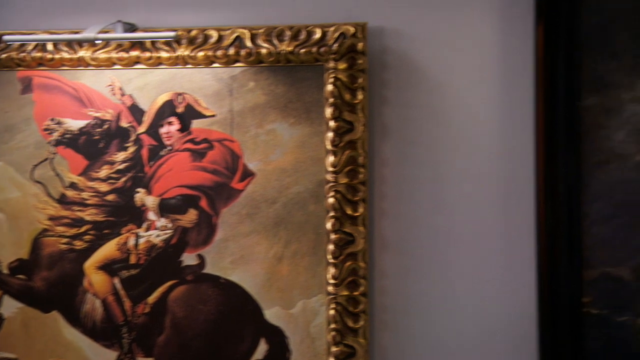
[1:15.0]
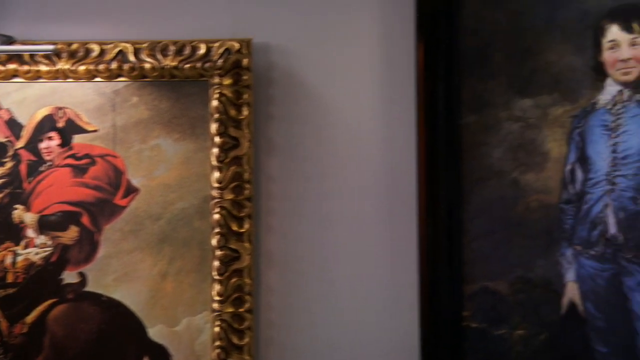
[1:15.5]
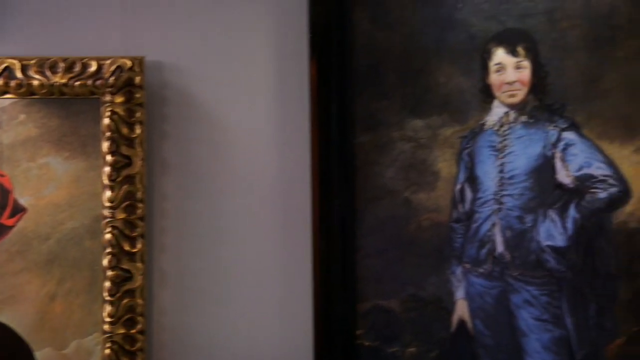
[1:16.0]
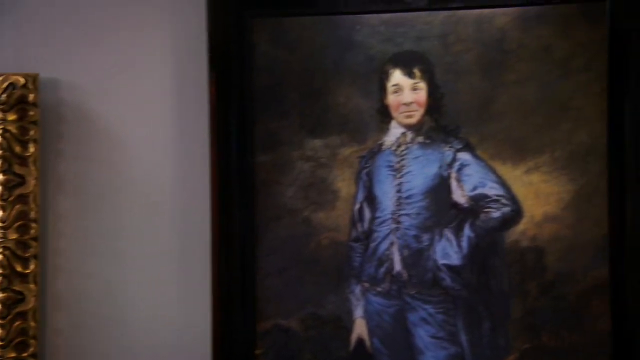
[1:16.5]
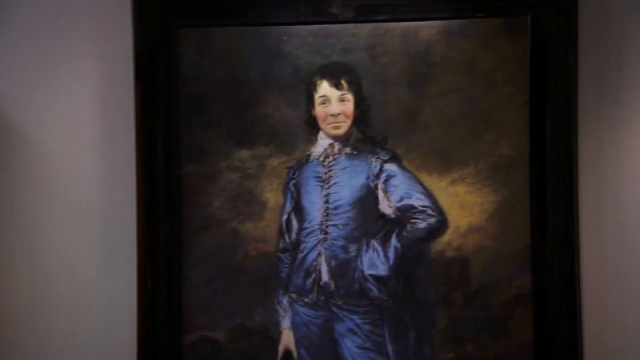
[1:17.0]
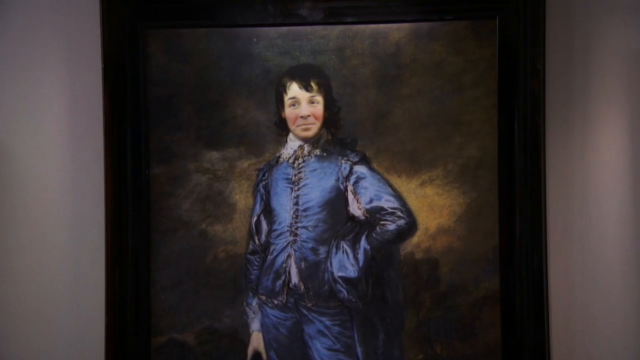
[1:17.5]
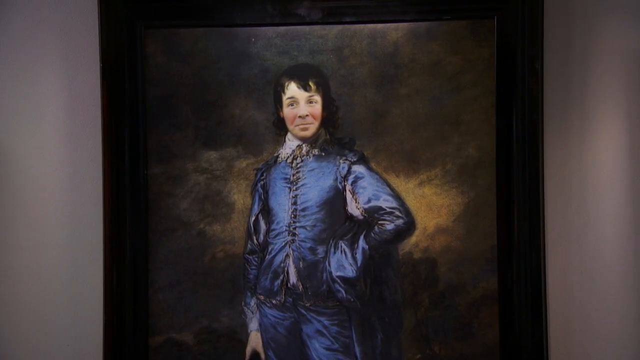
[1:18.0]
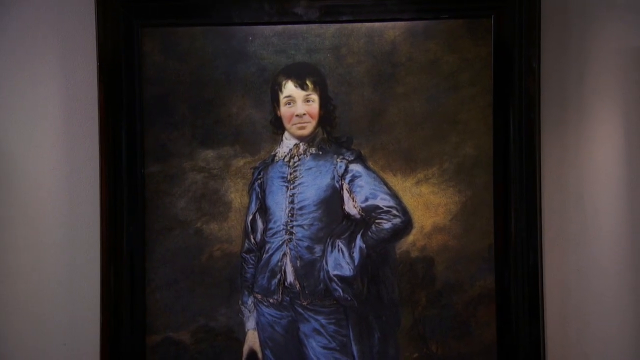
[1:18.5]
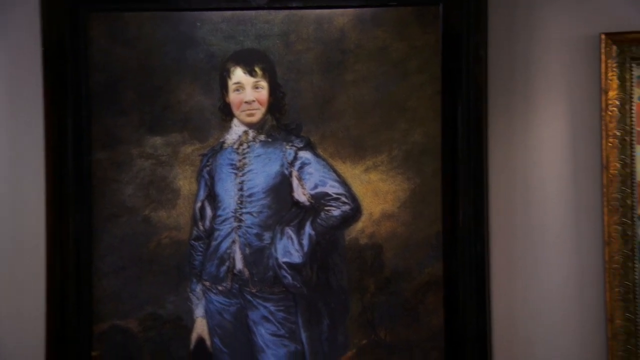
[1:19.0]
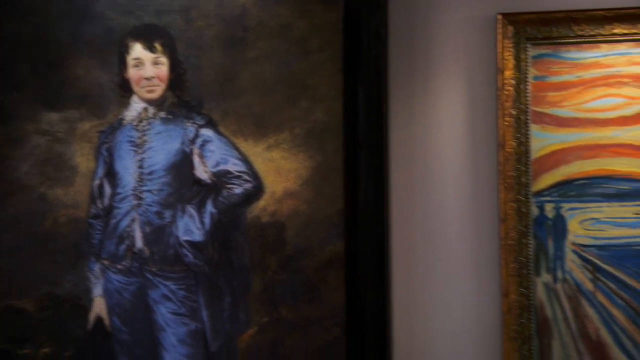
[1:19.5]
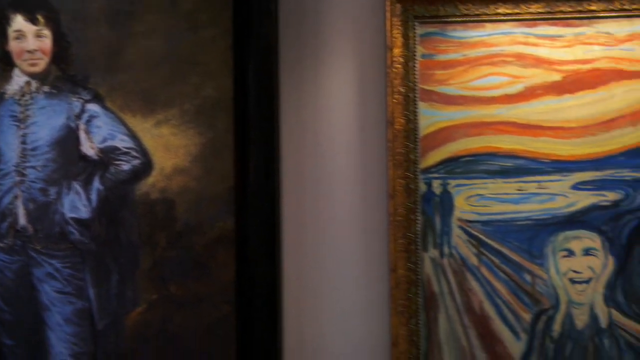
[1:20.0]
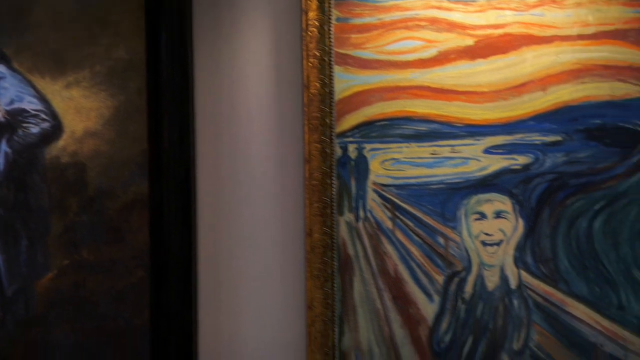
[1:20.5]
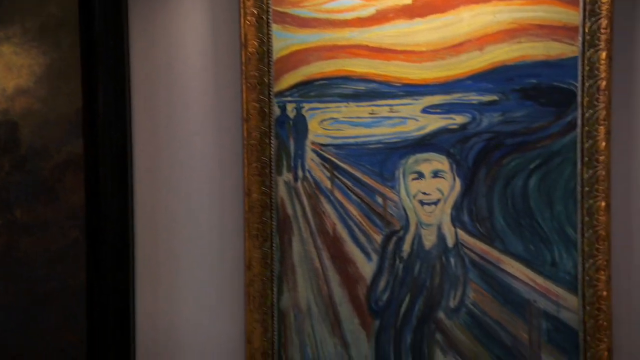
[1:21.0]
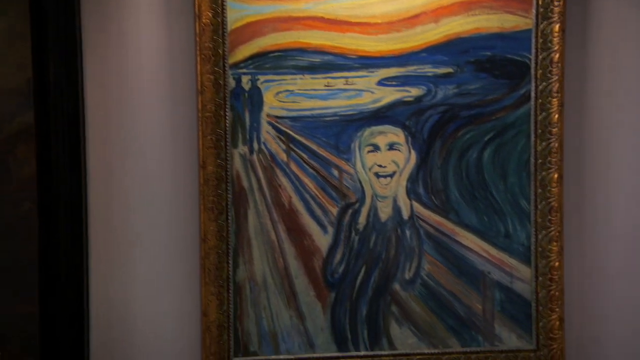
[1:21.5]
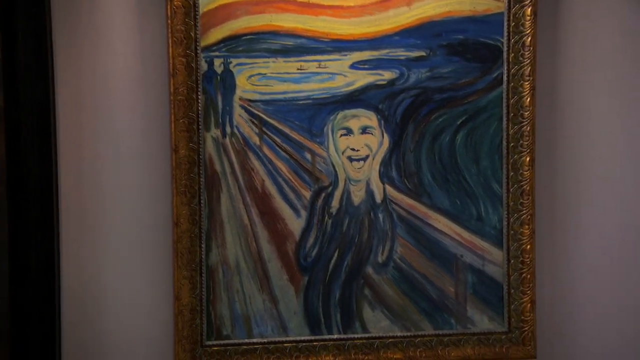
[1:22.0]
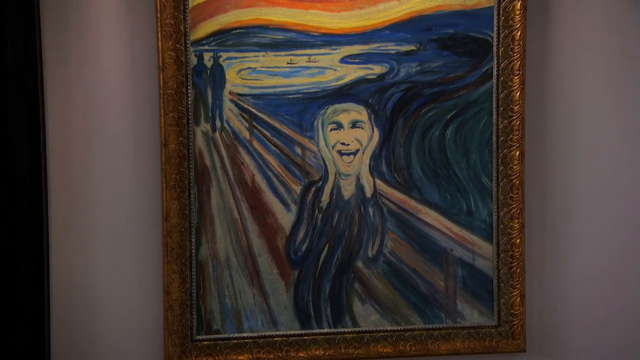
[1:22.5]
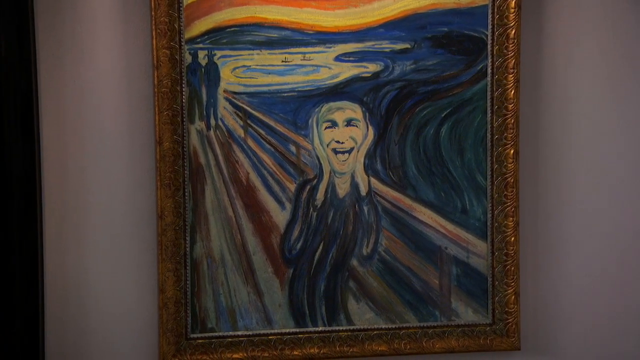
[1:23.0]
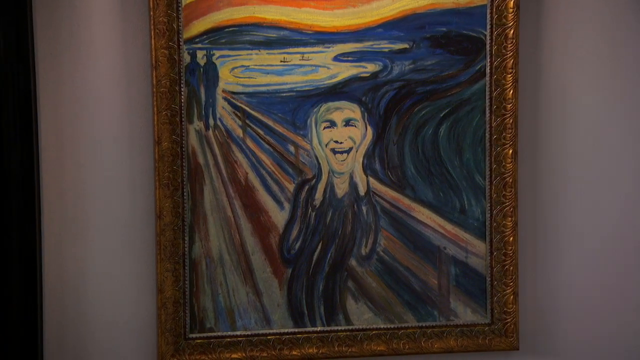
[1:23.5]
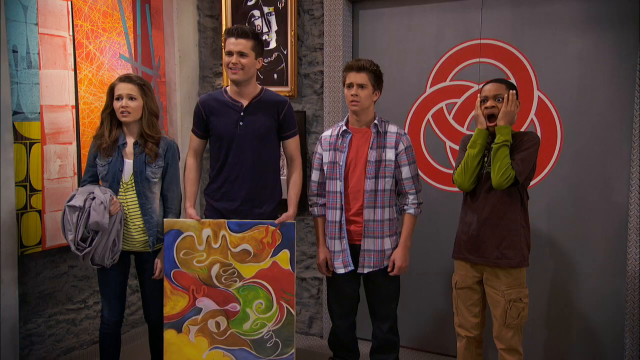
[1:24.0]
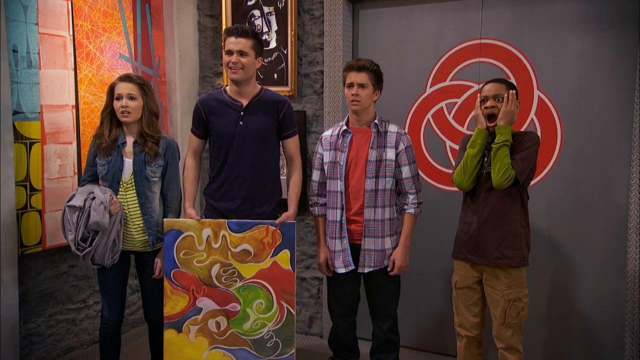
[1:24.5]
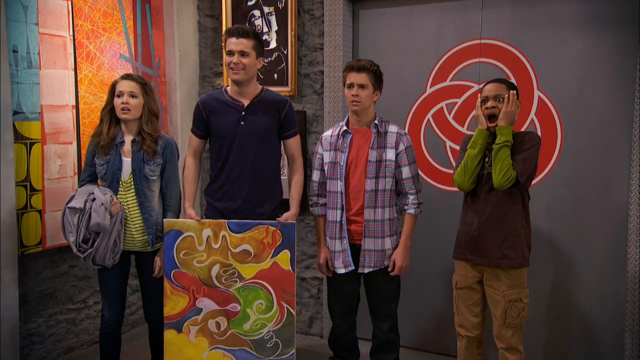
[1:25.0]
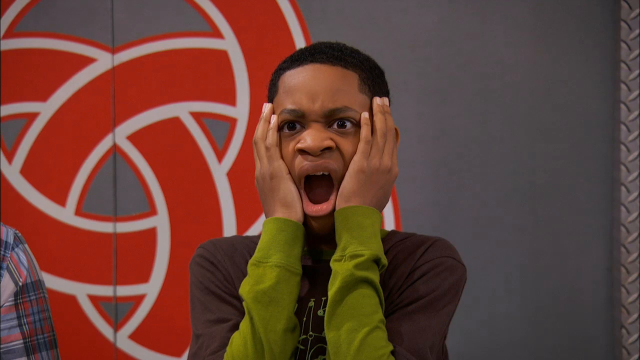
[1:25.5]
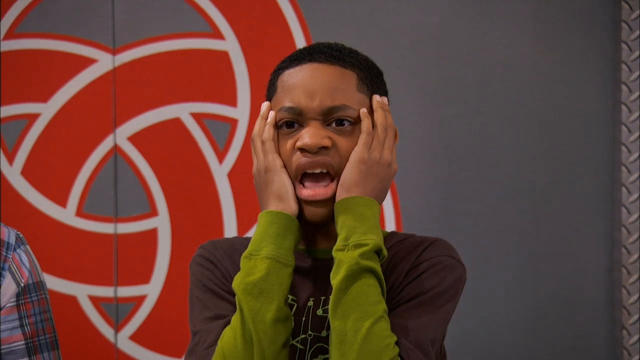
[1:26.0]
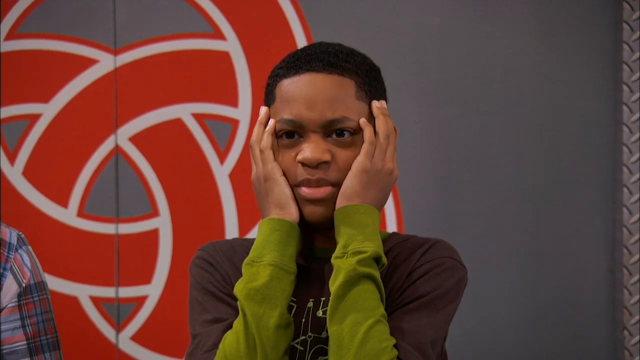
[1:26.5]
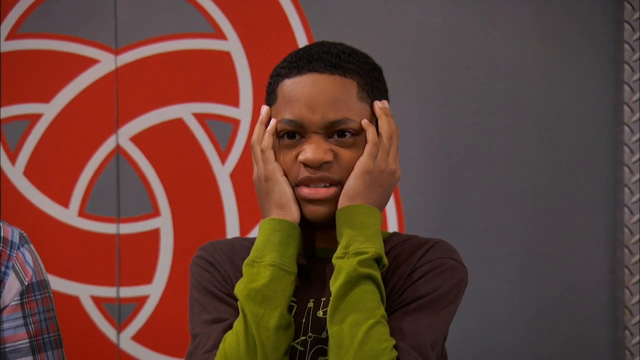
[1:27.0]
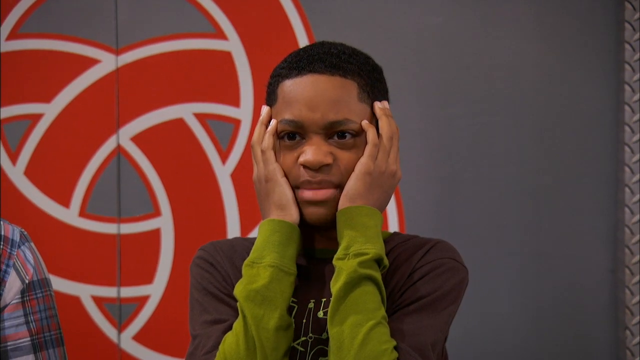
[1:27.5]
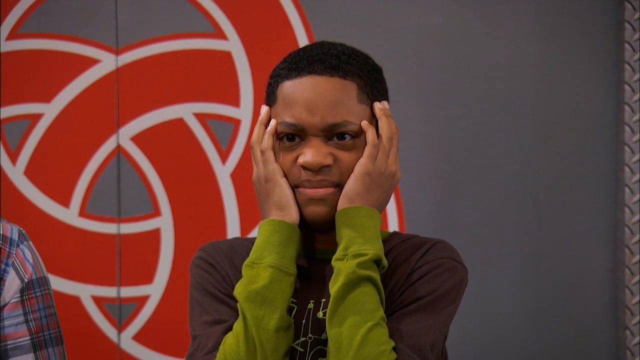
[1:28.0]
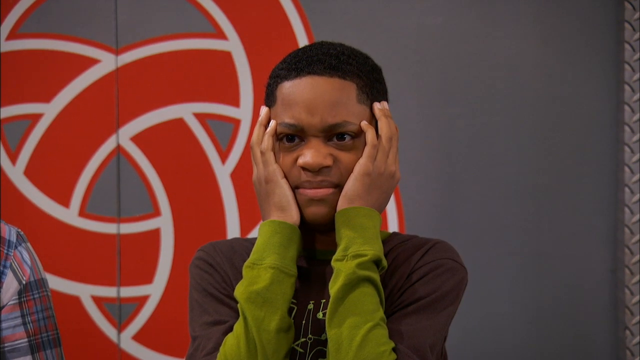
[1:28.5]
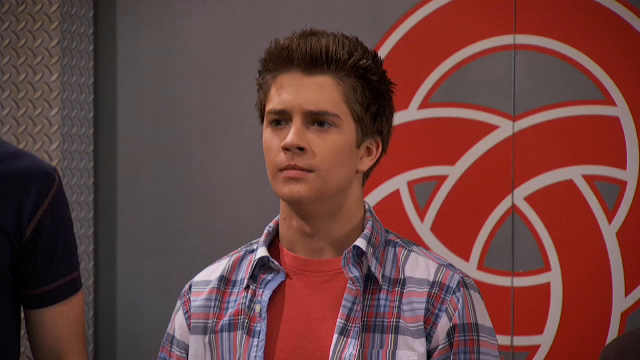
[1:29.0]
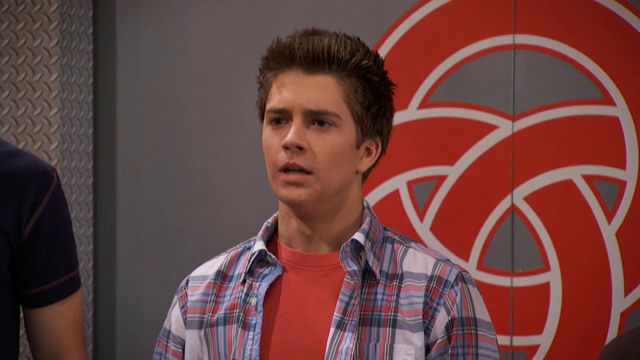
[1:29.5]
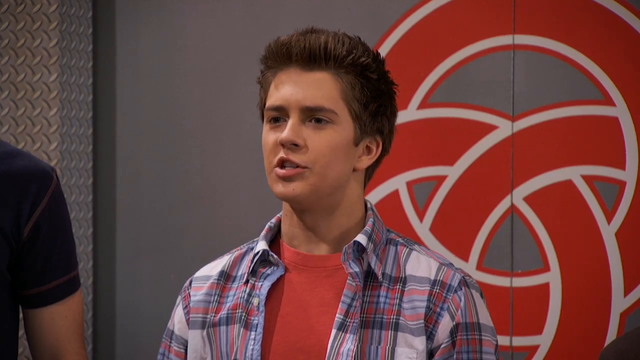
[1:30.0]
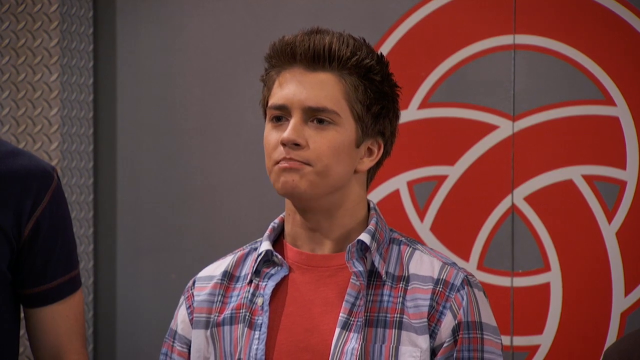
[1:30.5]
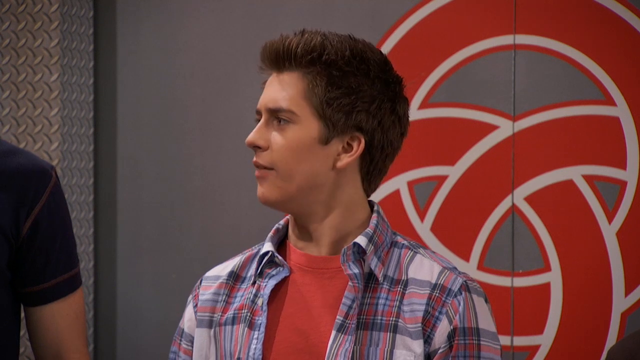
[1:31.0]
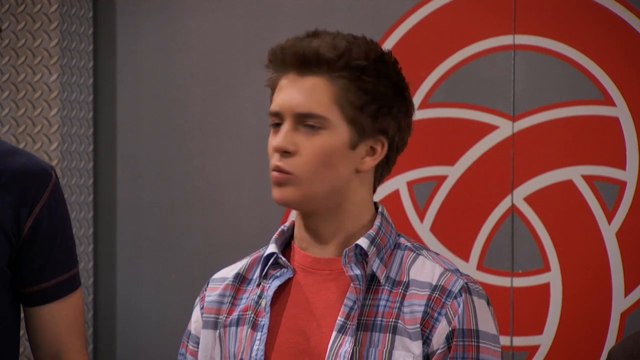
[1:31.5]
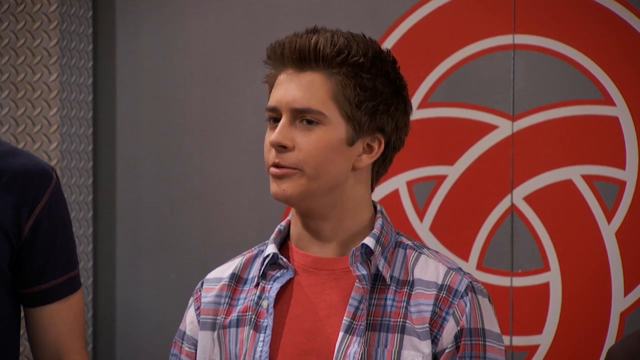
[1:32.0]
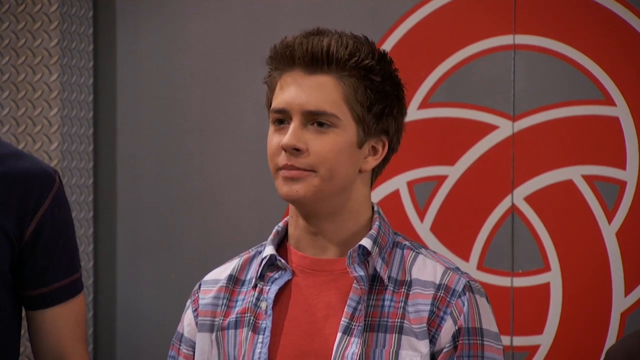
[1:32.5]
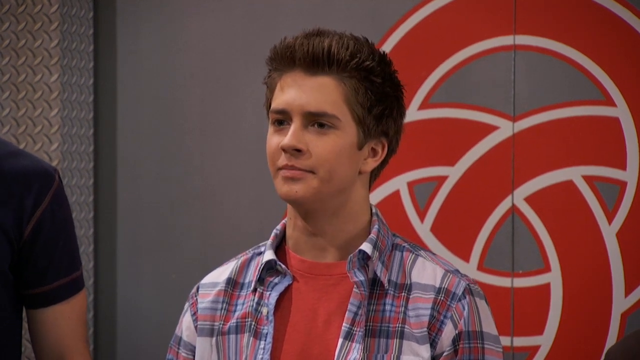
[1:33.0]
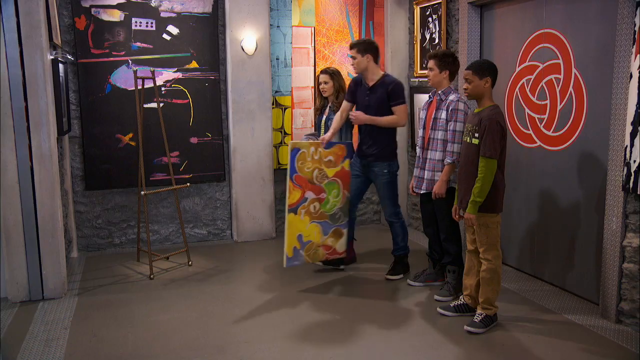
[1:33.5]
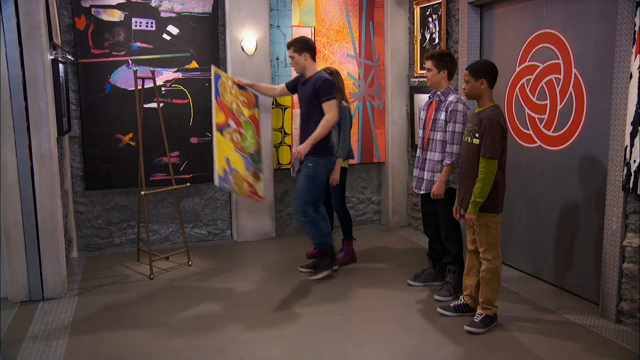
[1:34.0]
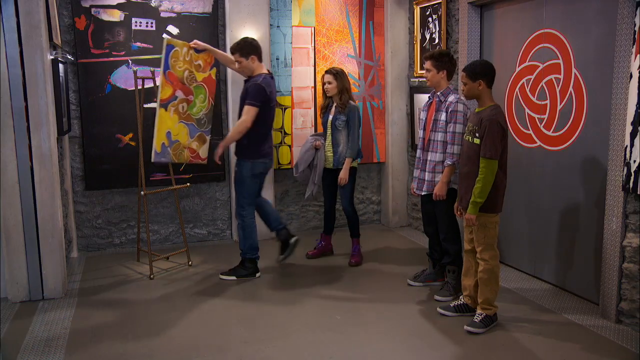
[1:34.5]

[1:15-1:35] The painting of the man on the reared-up horse has a plain gray sky as its background and is in a gilded gold frame on a gray wall. The camera pans to the right to a second painting, of a tall, thin man in Victorian dress in shades of blue with a white blouse; the background is dark, the man is very pale, and red is painted into his cheeks. The camera continues across the wall and dips a bit lower to a third painting, a parody of The Scream in which the figure is replaced by a simulation of the face of one of the teenagers from earlier. The camera settles on that painting. The view then turns to the opposite direction, showing the four teens, one holding the painting that was on the easel earlier; they seem surprised to see the parody of The Scream hanging on the wall.